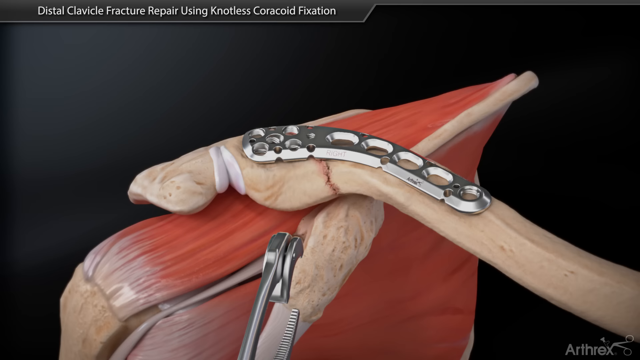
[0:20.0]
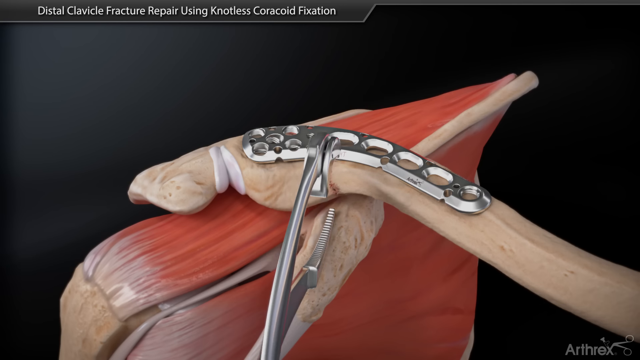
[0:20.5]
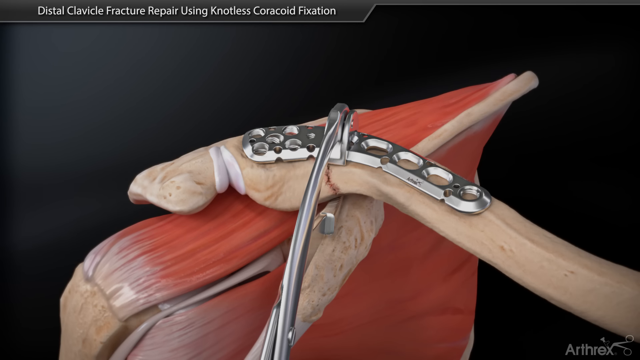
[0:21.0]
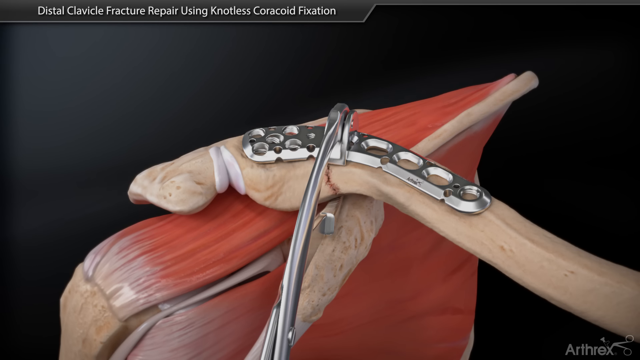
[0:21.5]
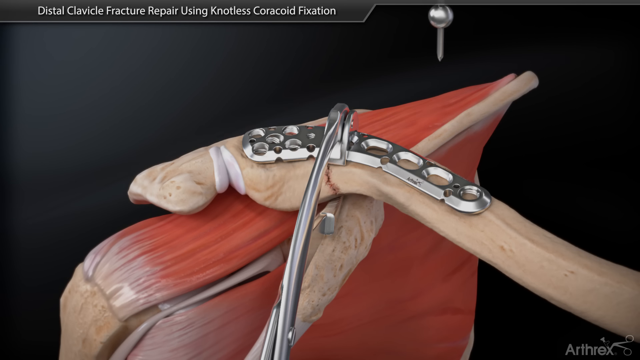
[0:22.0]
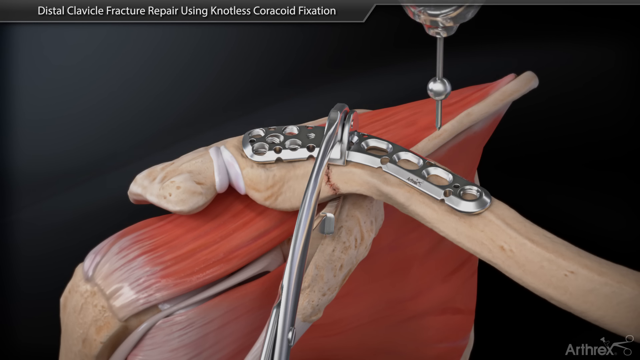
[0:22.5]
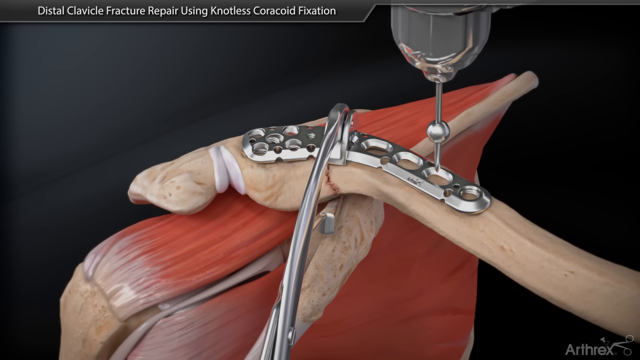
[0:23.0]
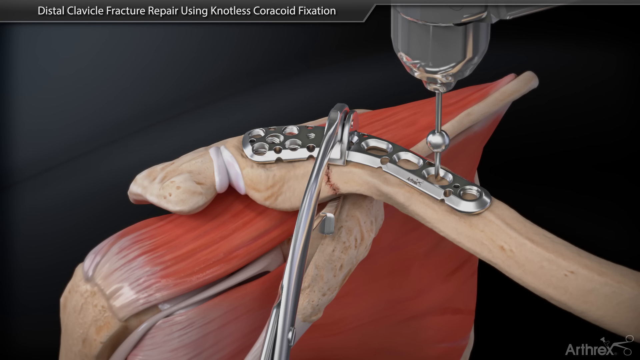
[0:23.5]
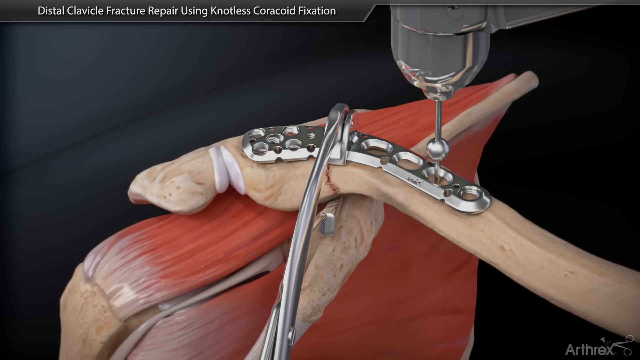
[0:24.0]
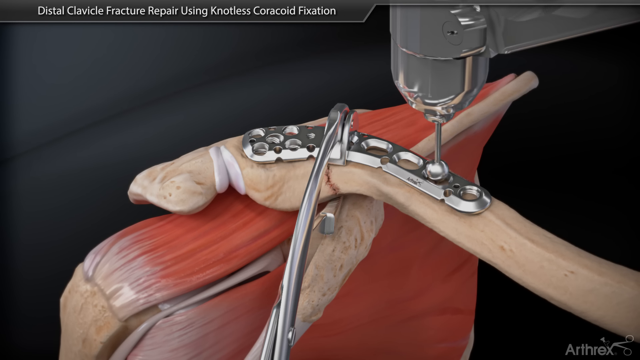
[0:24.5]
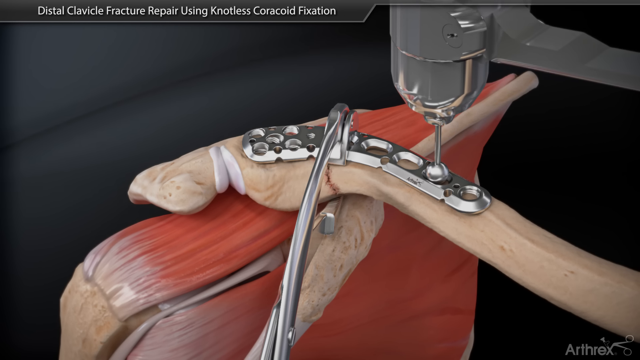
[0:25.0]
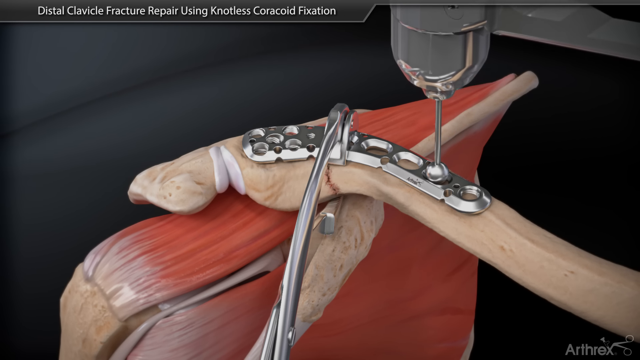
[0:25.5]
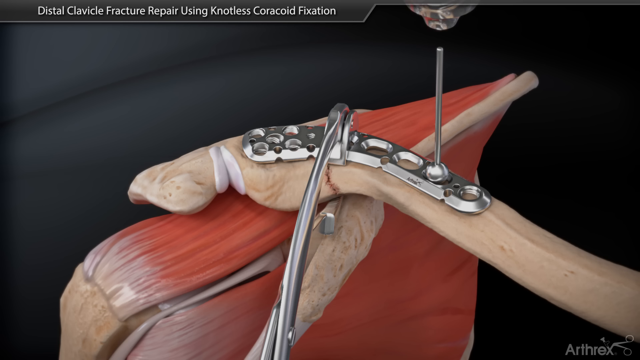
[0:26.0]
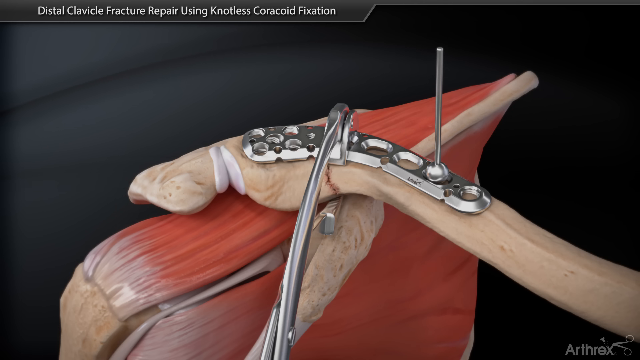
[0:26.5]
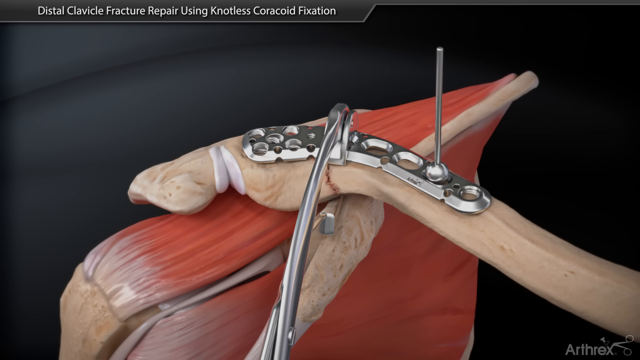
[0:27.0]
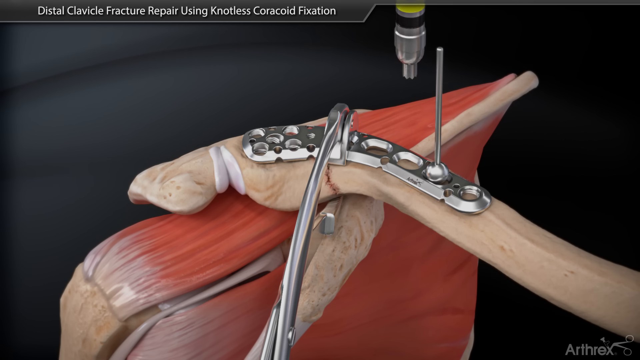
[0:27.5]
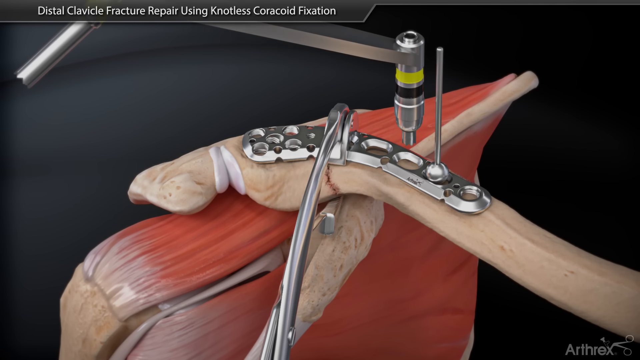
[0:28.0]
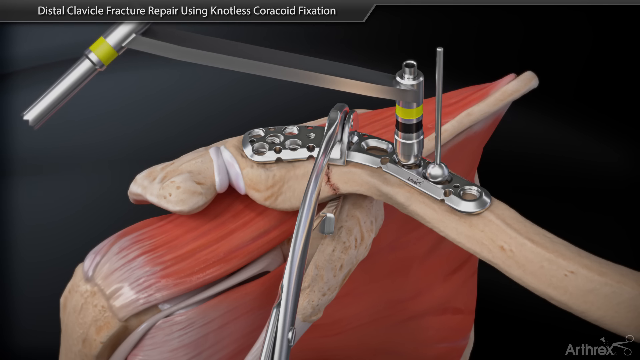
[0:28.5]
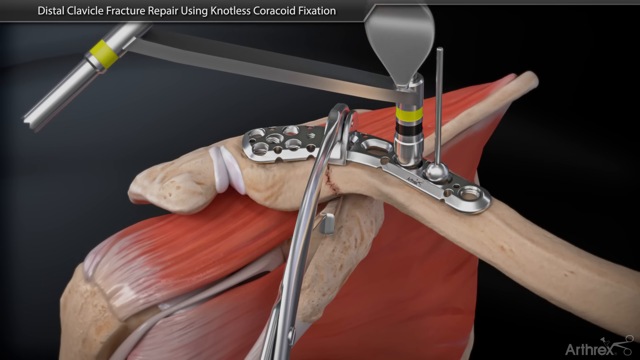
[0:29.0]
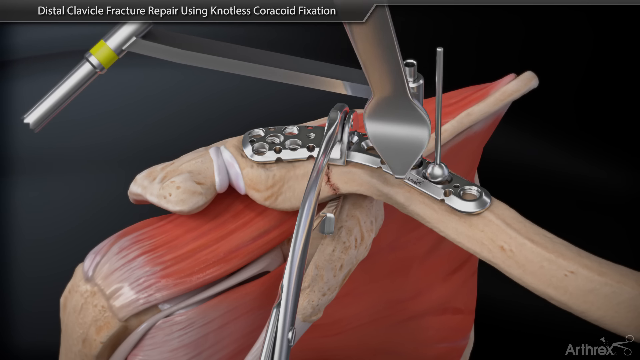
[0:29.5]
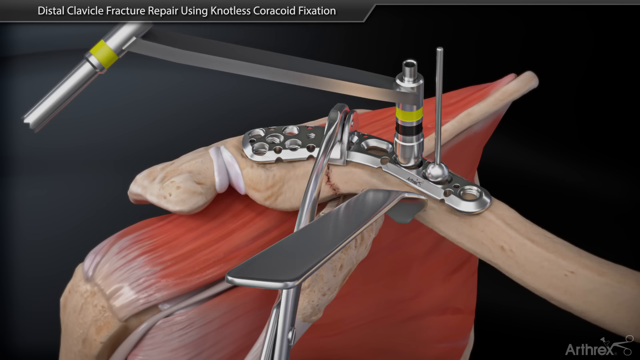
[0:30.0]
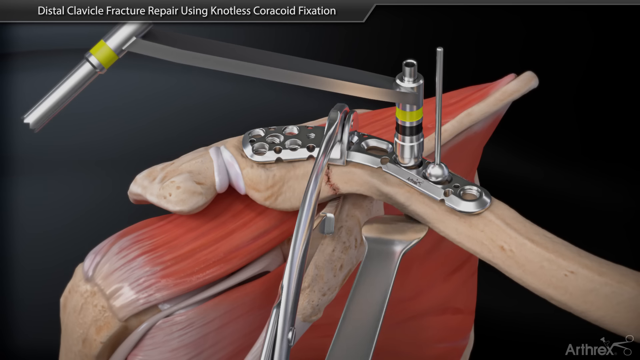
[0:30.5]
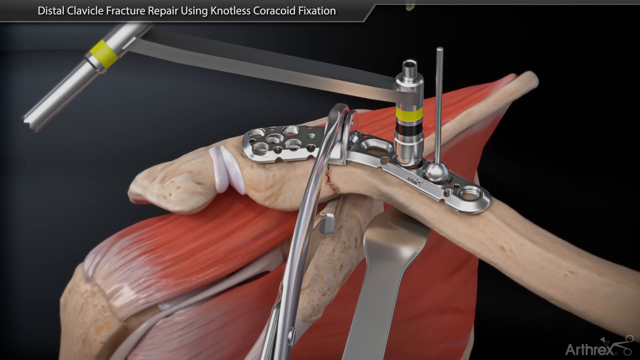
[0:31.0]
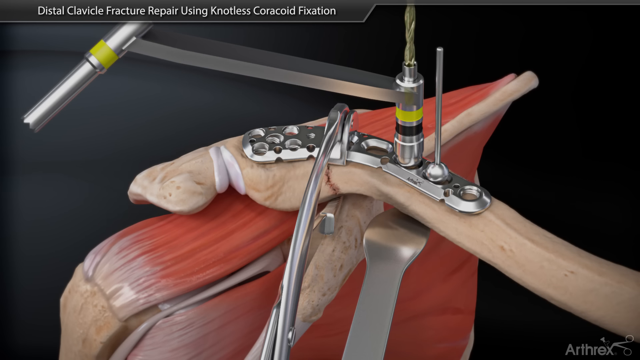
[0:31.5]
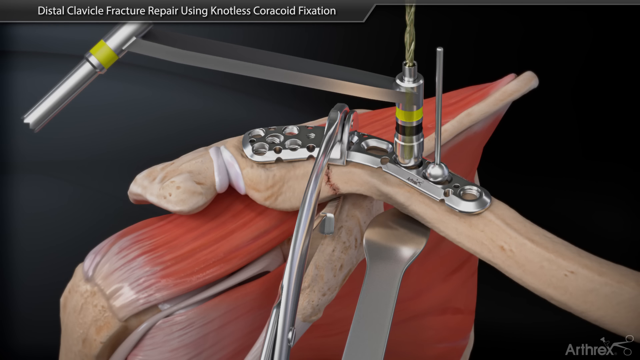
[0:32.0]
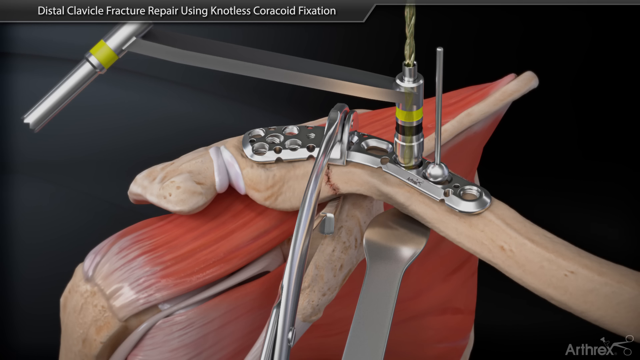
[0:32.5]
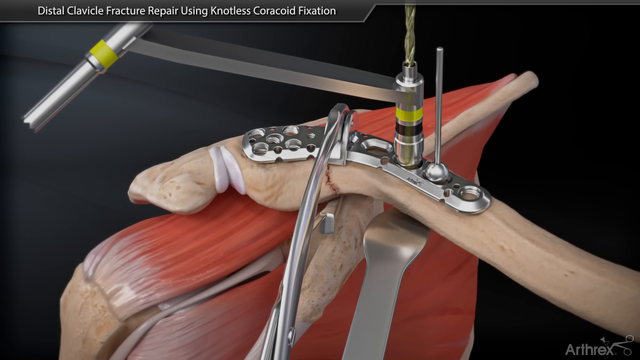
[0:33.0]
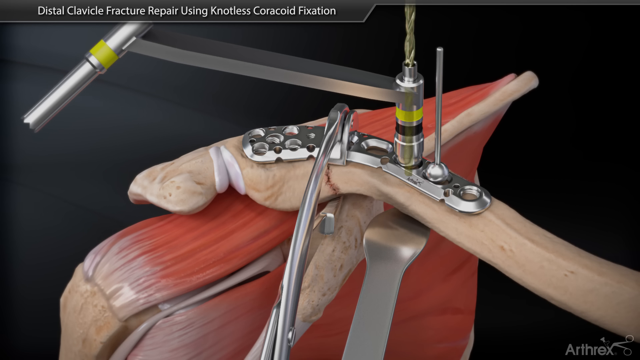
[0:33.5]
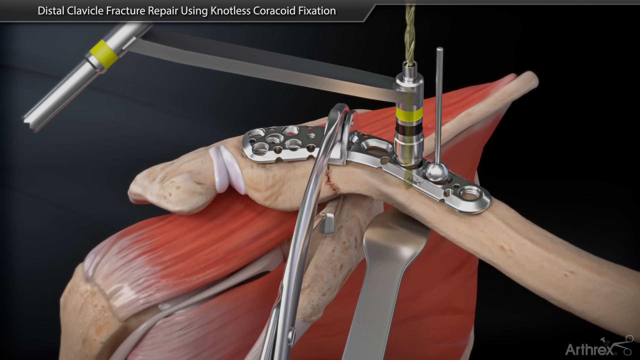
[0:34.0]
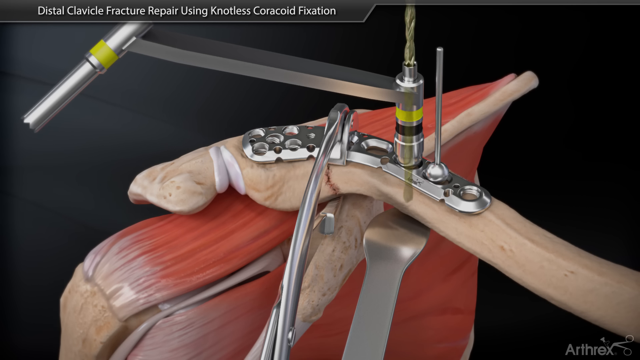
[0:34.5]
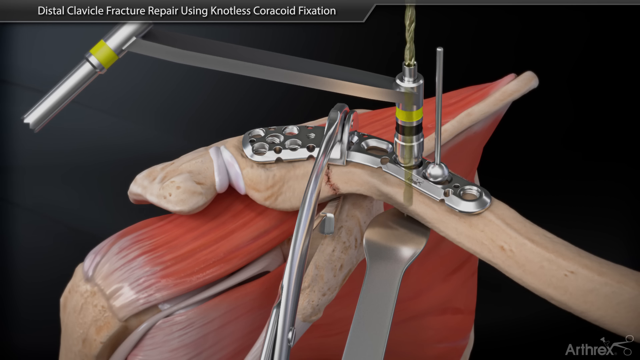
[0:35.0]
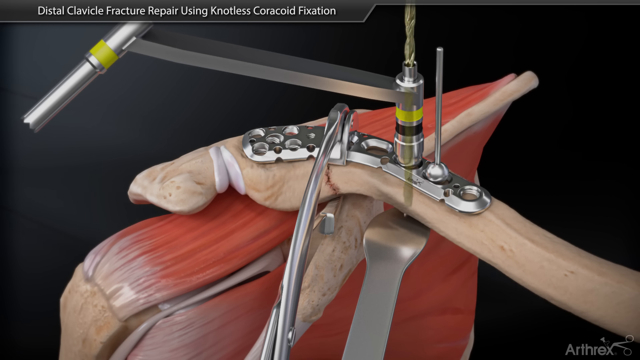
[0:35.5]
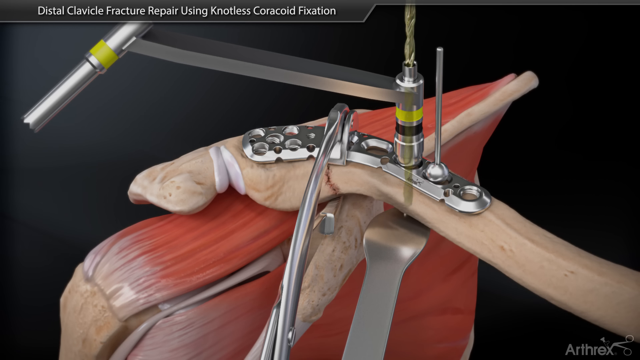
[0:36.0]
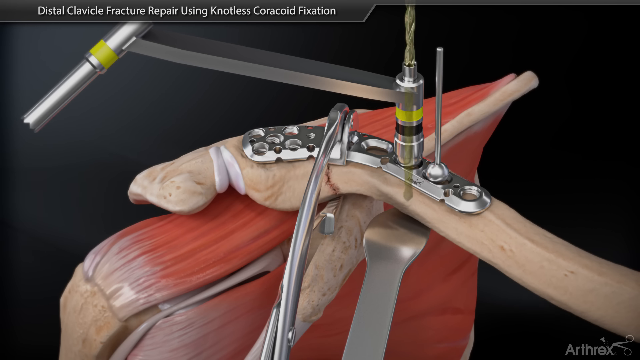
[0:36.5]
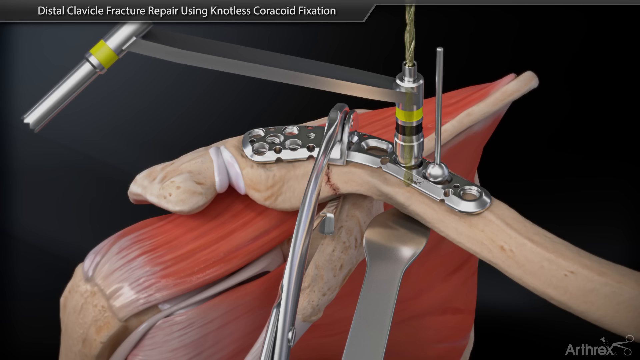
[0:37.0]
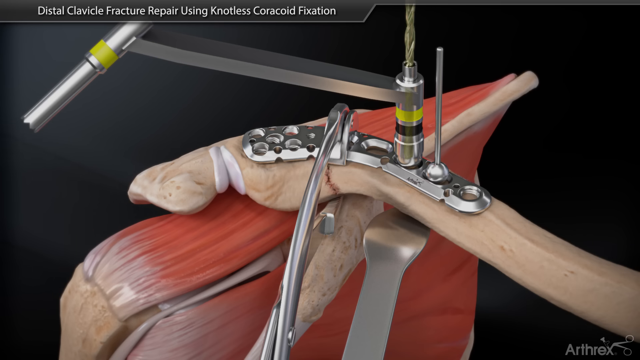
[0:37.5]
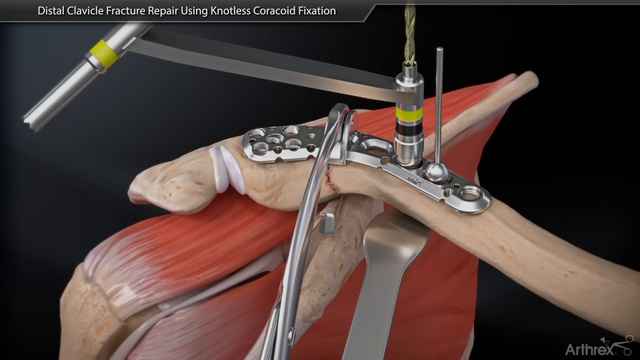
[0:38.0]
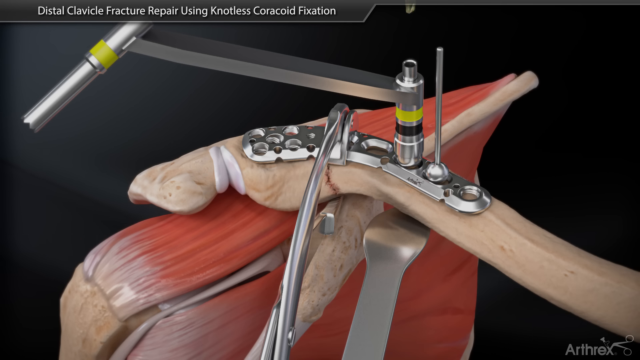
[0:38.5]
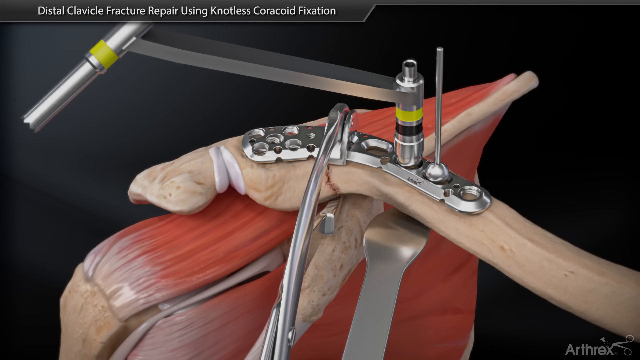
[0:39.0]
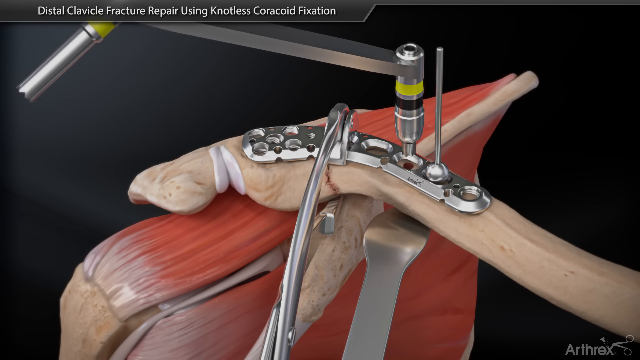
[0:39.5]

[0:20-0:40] The bone sits in the muscle with the piece of metal laying on it to fix the bone. The crack in the bone is visible right where the muscle starts, almost dead center of the image. Two big metal pieces come up from the bottom as clamps, their handles still off the bottom of the screen, reach the center part of the metal, and clamp down on it. At the oblong hole second from the far right, a little drill comes down from the top with a little pin that has a round part on top and pushes it down in, leaving a big long pin sticking out about six inches. Then a second device comes in, this time from the left: a little arm goes up to the right and another arm goes down to the left where the hole is, with a big cylinder going down into it. A little flat plate comes down in front of the bone, underneath it, and a drill comes down through the hole, drilling until it hits the metal piece underneath, then comes back out. That piece then lifts off and goes off the left side of the screen.